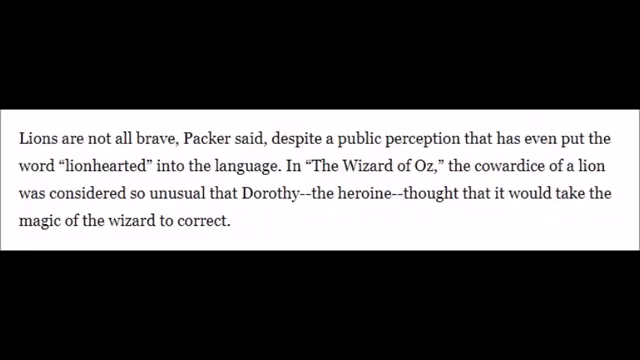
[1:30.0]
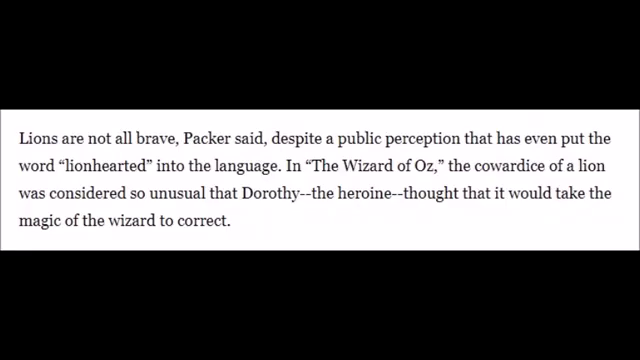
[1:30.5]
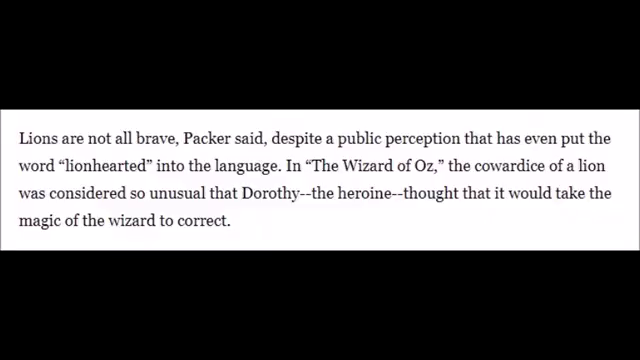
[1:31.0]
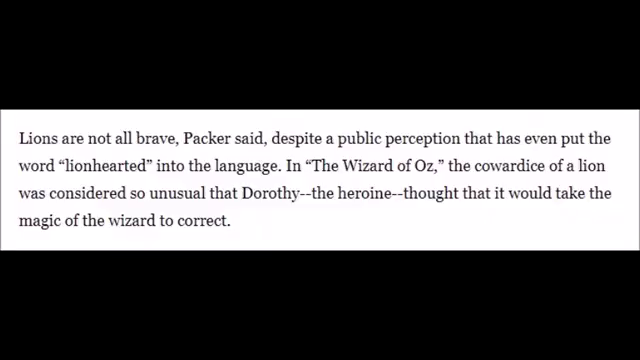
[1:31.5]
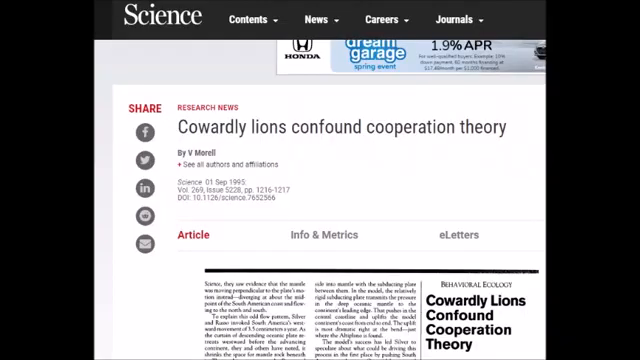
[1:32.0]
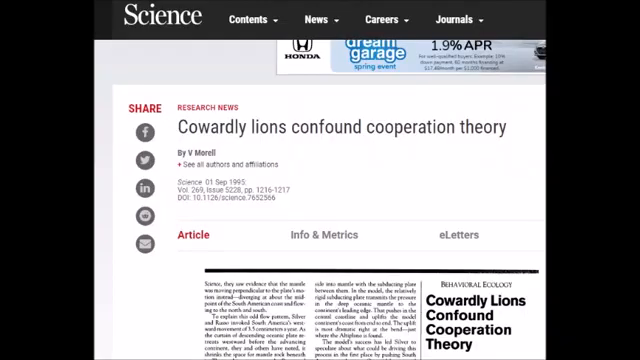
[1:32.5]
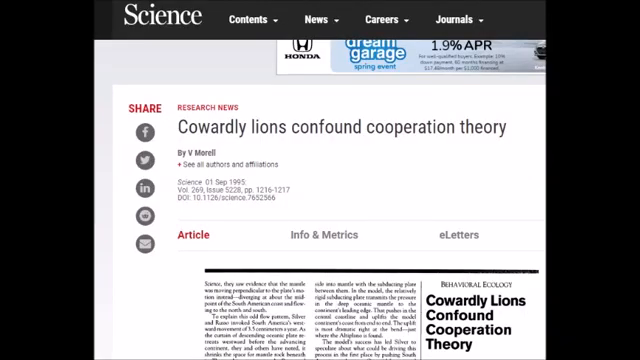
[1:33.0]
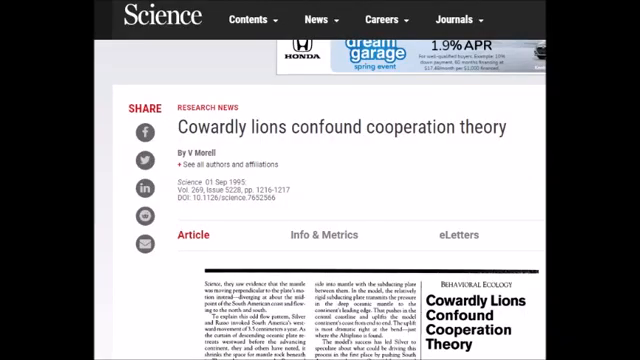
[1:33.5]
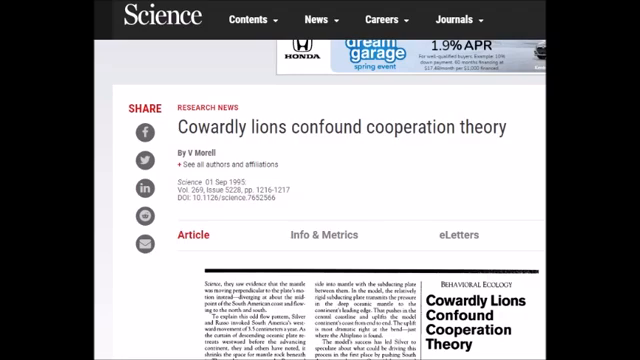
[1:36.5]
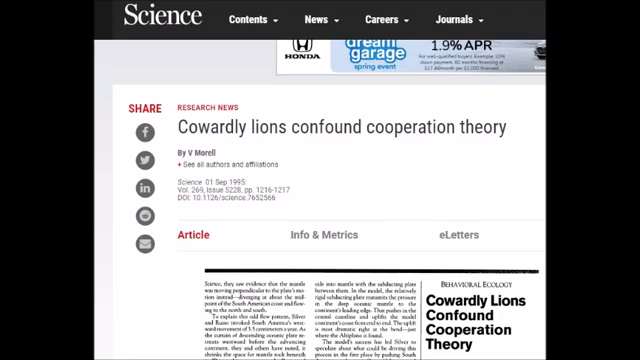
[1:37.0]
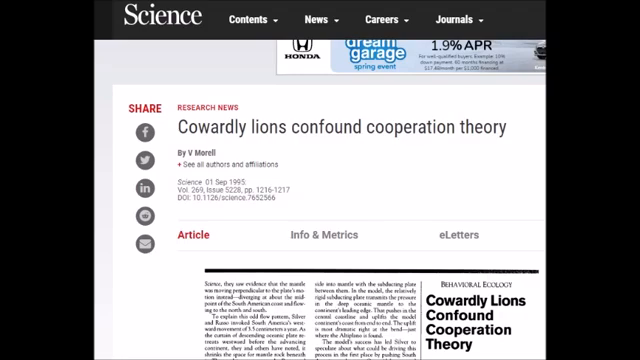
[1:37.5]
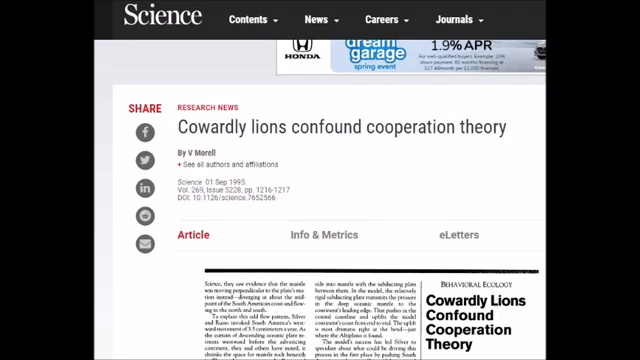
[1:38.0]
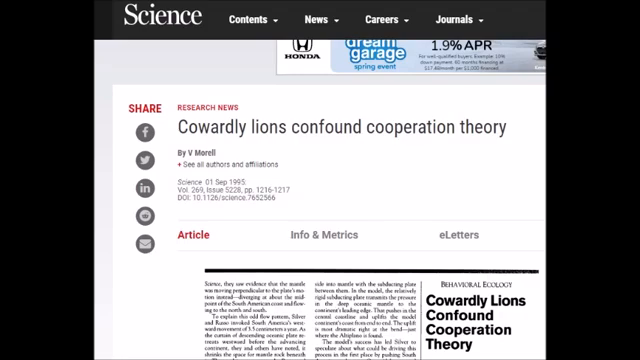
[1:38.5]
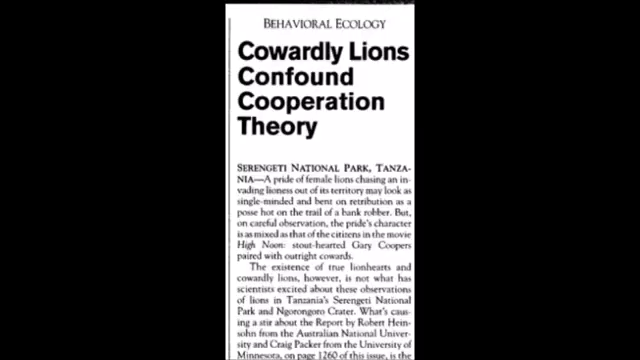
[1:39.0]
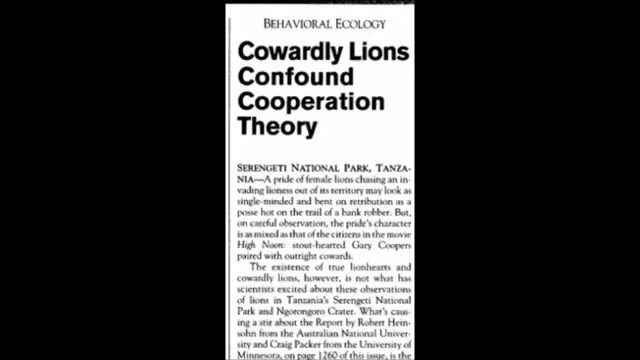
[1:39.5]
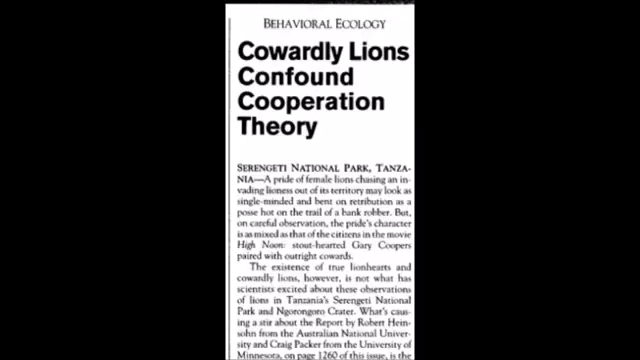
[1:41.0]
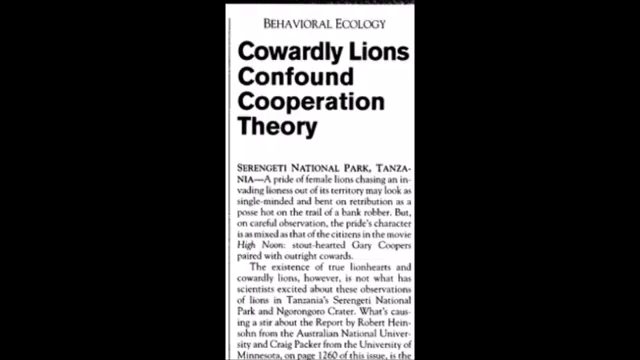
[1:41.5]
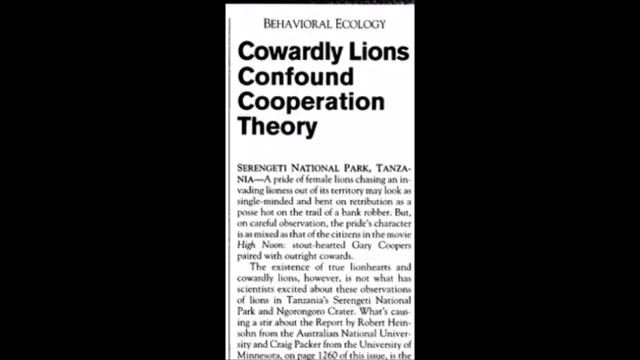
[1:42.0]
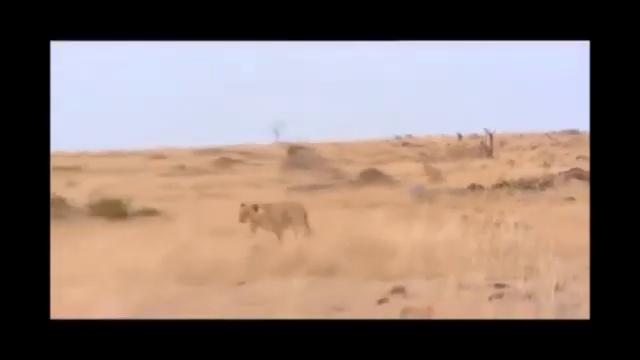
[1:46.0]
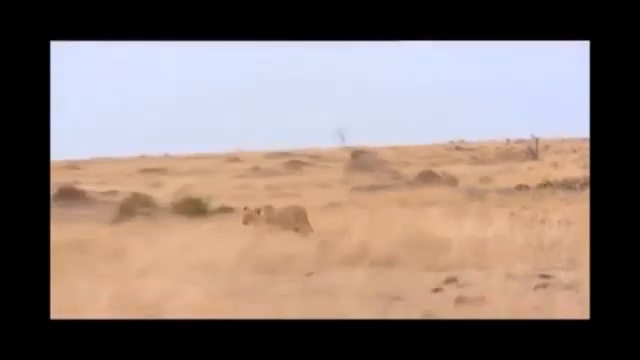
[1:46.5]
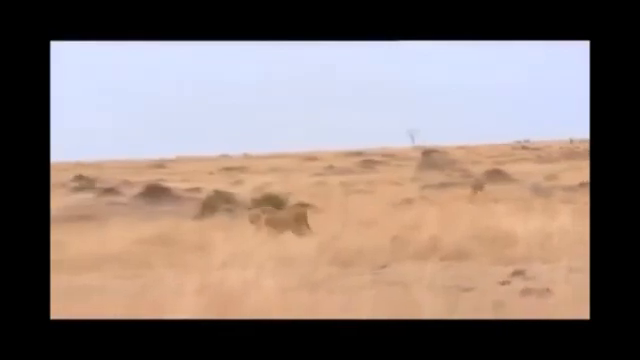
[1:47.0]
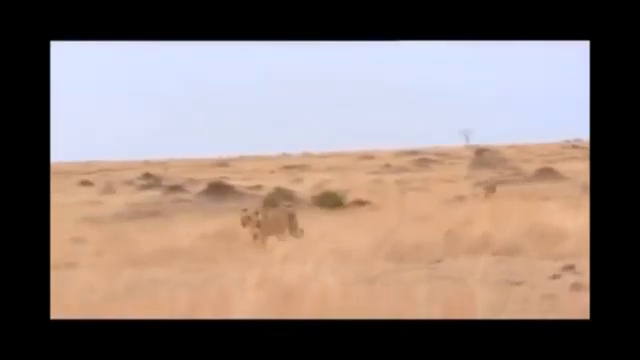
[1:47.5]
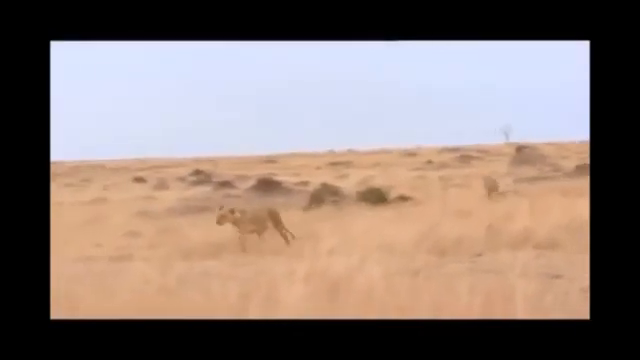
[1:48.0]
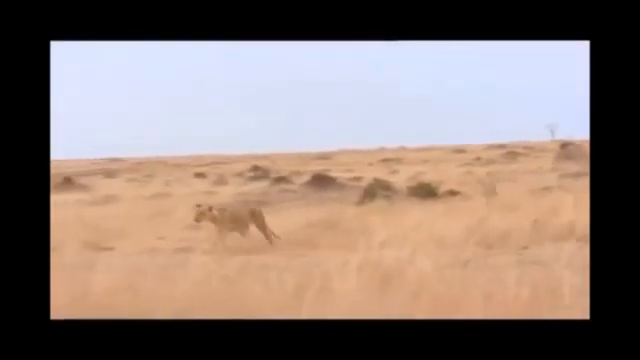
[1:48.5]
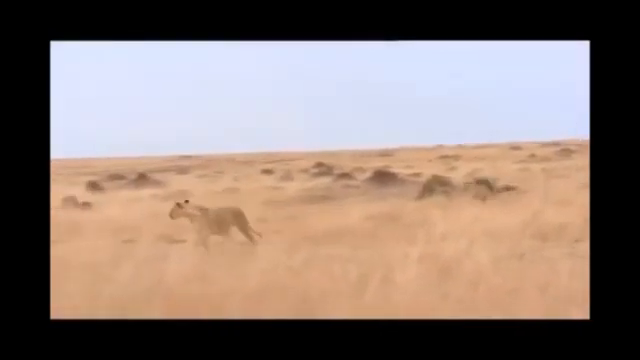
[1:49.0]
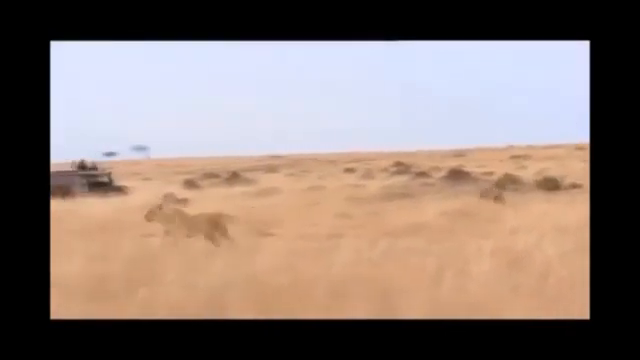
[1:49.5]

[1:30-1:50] An extract about lions reads: "Lions are not all brave, Packer said, despite a public perception that has even put the word lion-hearted into the language. In The Wizard of Oz, the cowardice of a lion was considered so unusual that Dorothy, the heroine, thought that it would take the magic of the wizard to correct." Another article published online follows, titled "Cowardly lions confound cooperation theory," by V. Morell. Then another news extract appears under a higher title, "Behavioral Ecology," reading "Cowardly lions confound cooperation theory," with several paragraphs of text underneath. Video footage follows of lions in a savanna, running through their natural habitat, with what appears to be a jeep in the distance, maybe monitoring them.